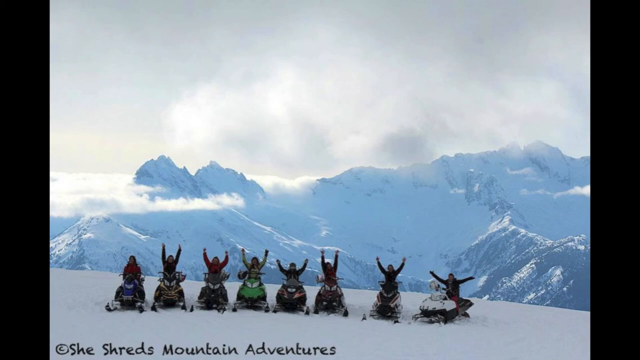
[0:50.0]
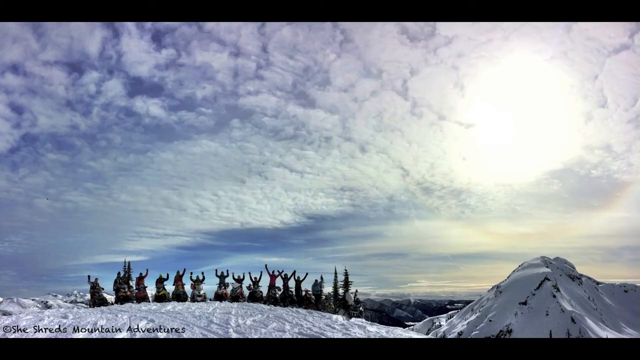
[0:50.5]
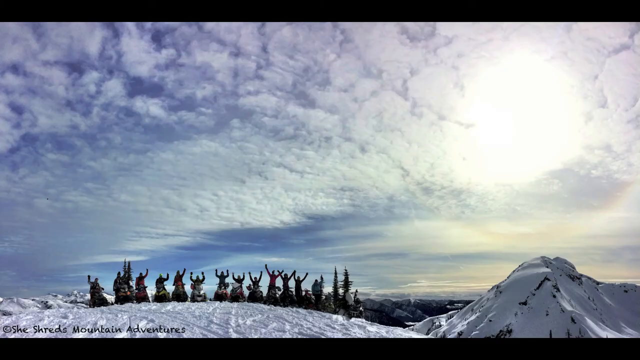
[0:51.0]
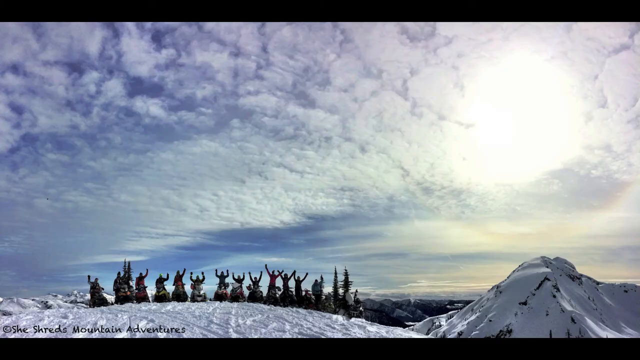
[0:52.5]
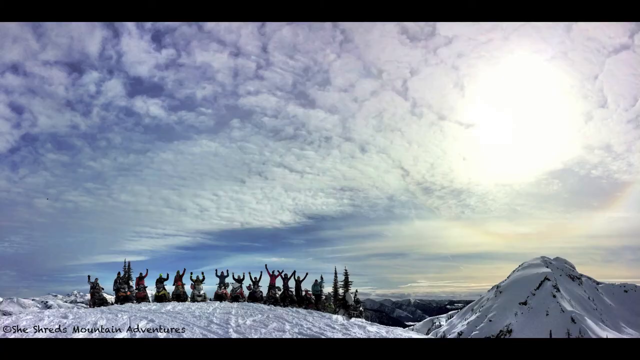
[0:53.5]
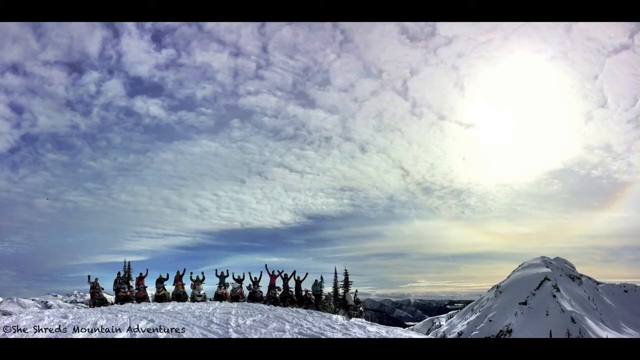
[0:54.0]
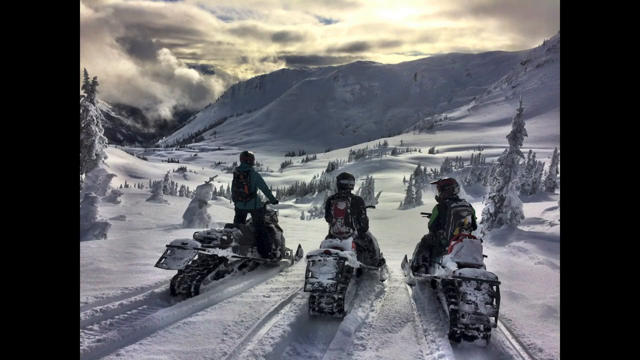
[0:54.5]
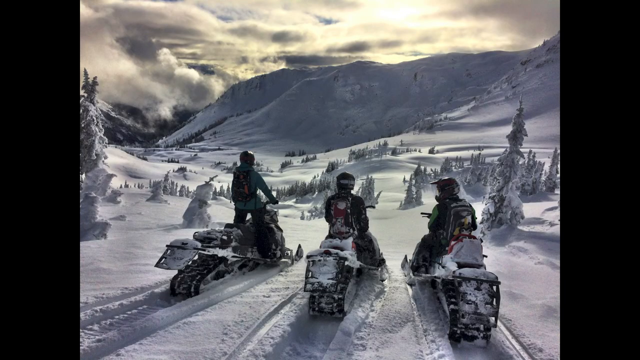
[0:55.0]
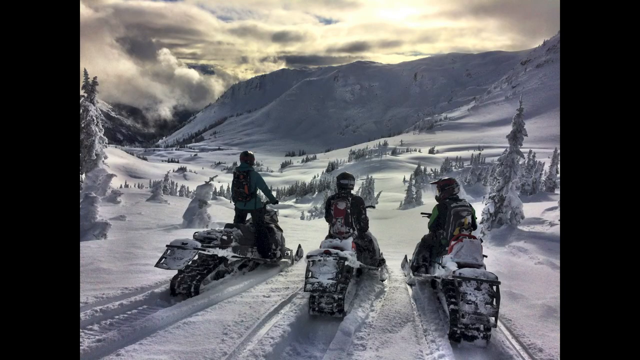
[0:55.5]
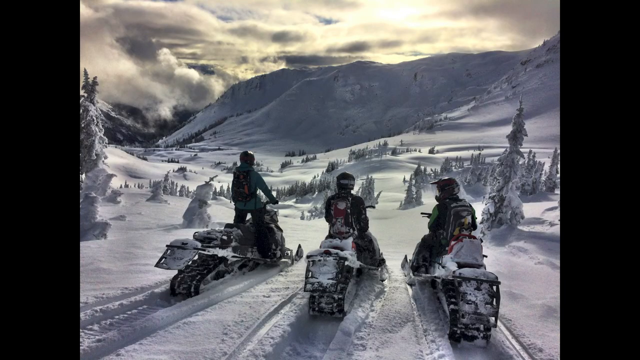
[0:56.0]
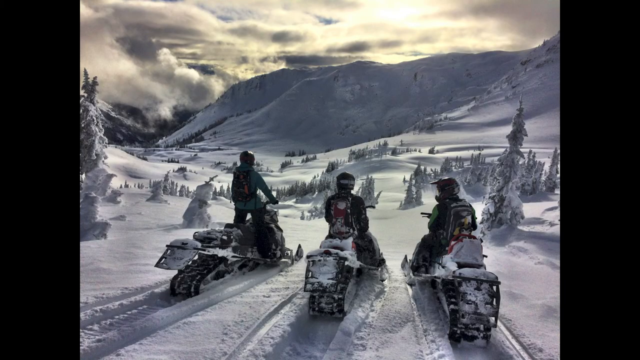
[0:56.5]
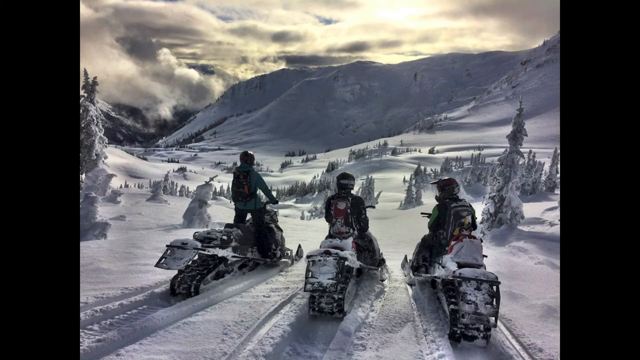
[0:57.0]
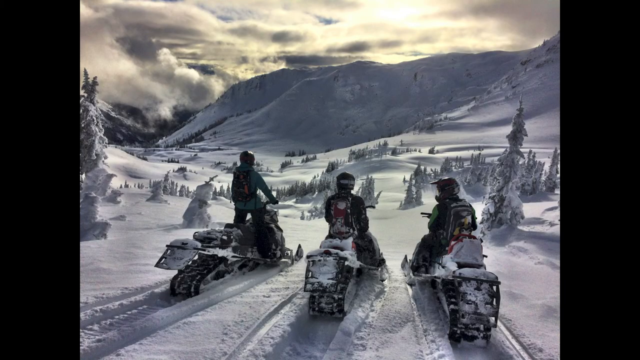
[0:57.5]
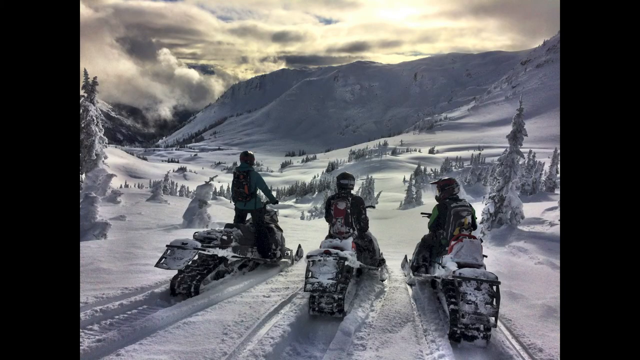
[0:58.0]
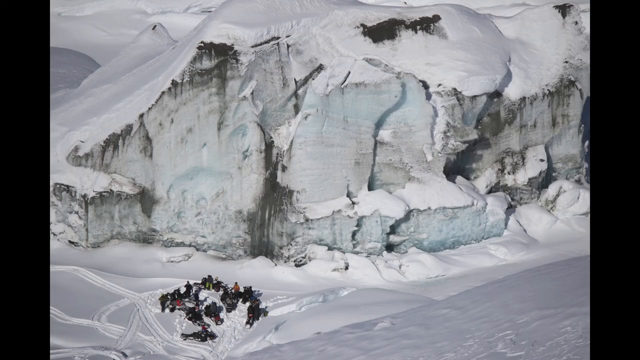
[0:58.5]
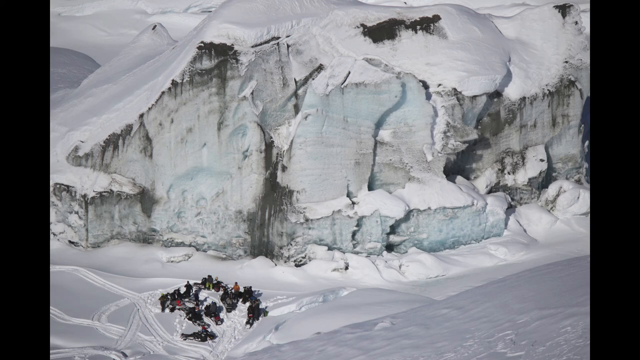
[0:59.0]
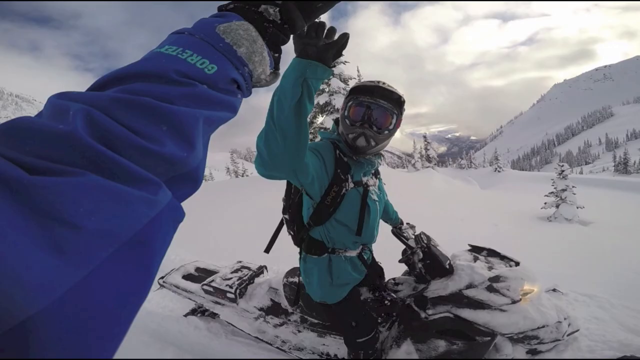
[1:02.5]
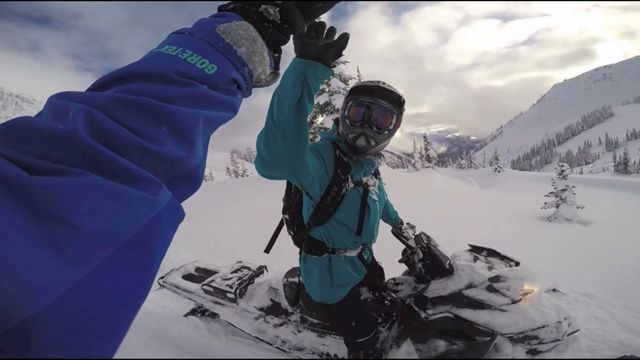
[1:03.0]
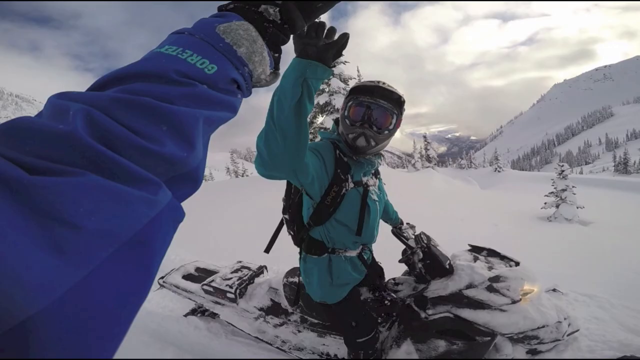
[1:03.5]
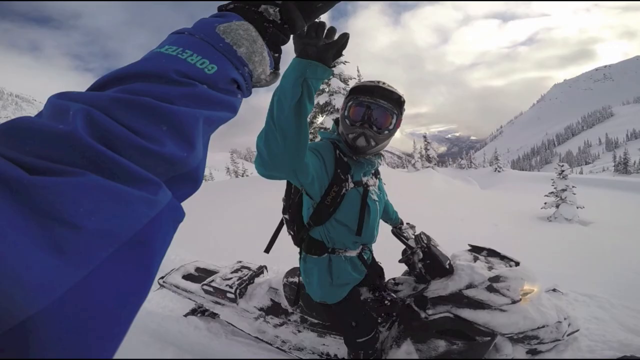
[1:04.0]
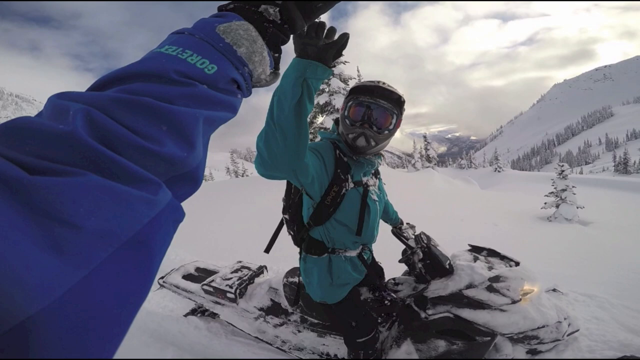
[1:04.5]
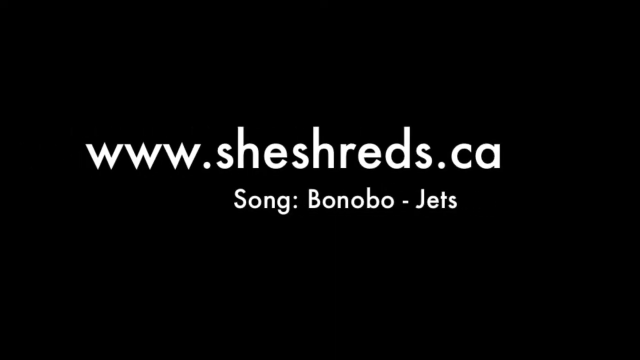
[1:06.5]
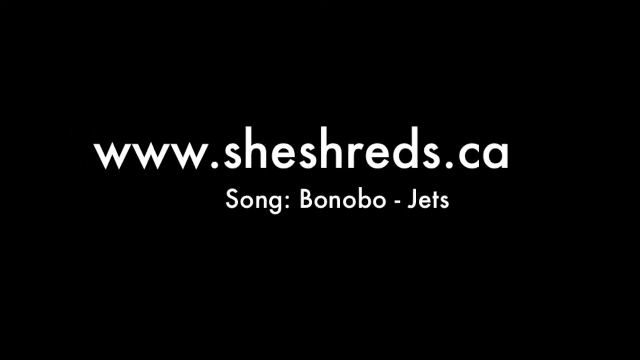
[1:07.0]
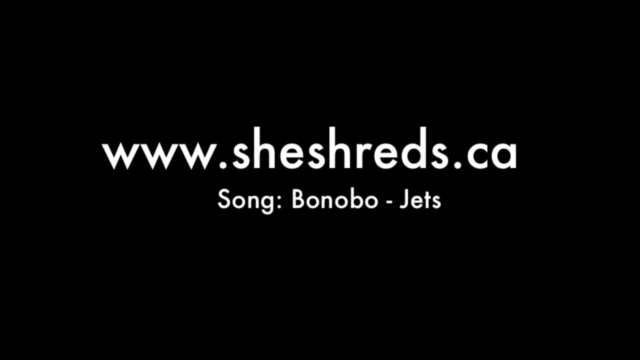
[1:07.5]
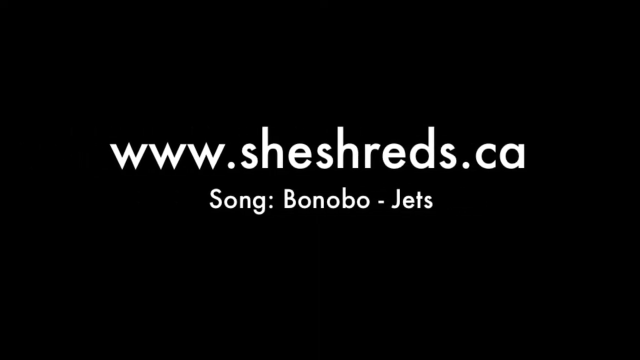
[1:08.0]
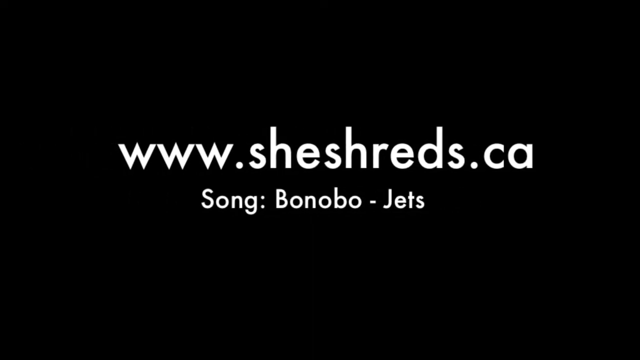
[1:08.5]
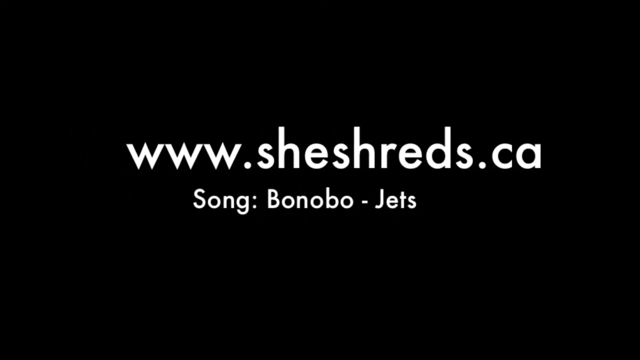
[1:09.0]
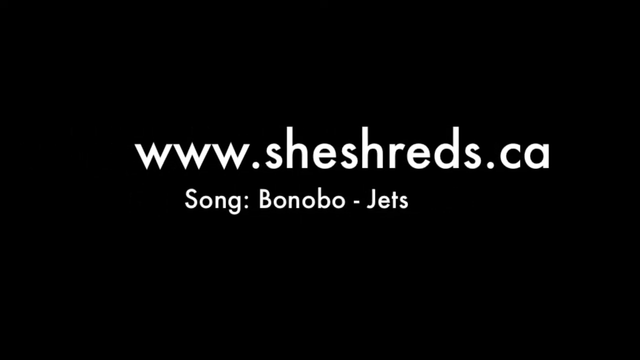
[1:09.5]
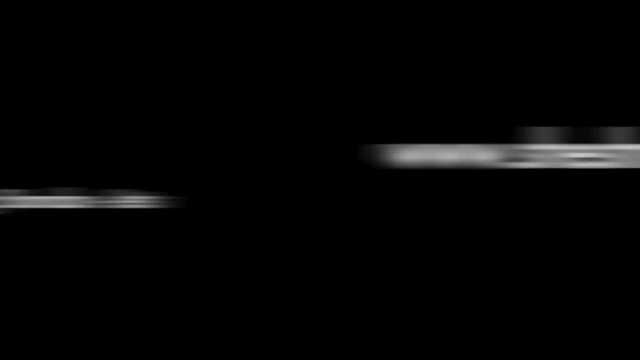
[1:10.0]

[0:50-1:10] A group of people is kind of lined up, all on top of snowmobiles with their hands up in the air, seemingly posing for a picture. Snow-capped mountains are in the background, and the sky is patchy with white clouds; the sun appears to be glowing through the clouds on the right side of the screen. Next, three people on snowmobiles seem to be looking out at a mountain range covered in snow, with many snow-covered pine trees as well. The video cuts to what kind of looks like a glacier, with fresh snow on top; the snow and ice in the middle look blue, with some gray parts. Finally, a person on a white snowmobile, wearing a turquoise jacket, gives a high five.